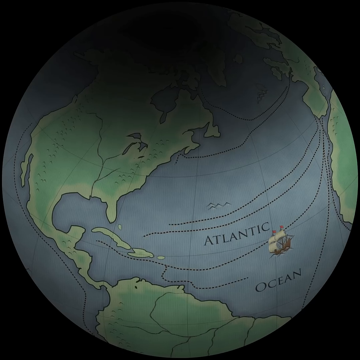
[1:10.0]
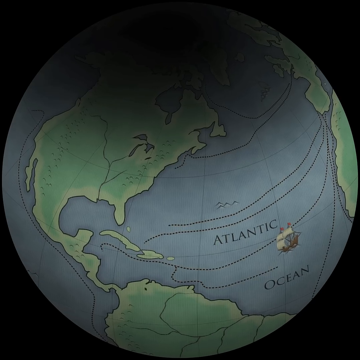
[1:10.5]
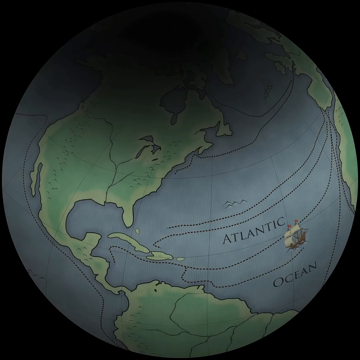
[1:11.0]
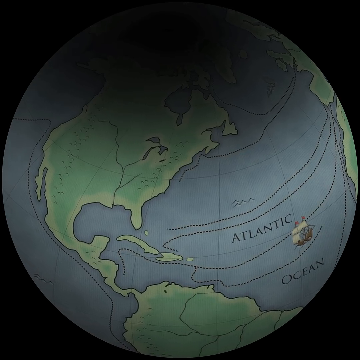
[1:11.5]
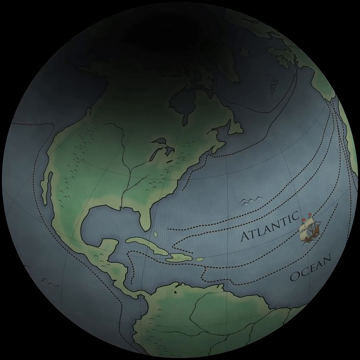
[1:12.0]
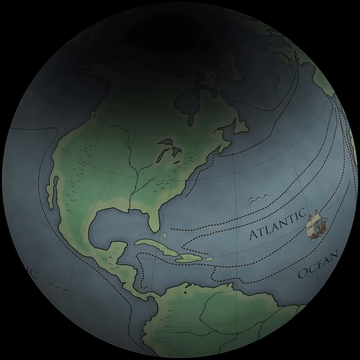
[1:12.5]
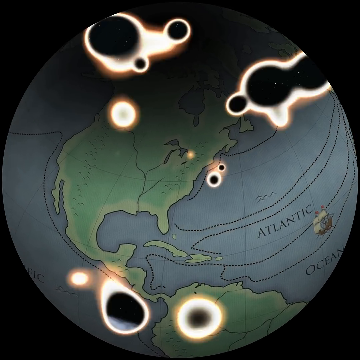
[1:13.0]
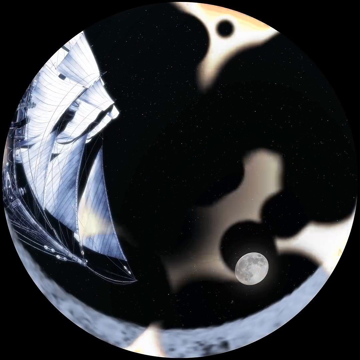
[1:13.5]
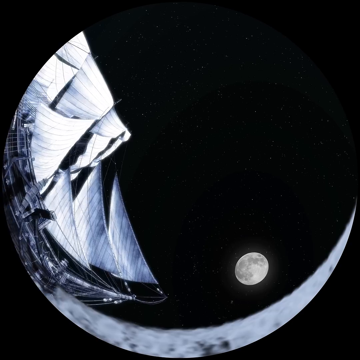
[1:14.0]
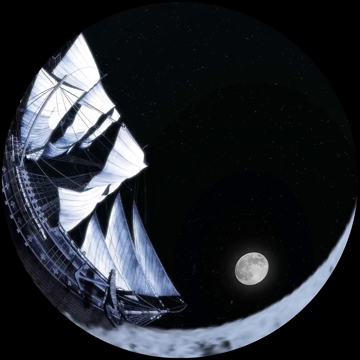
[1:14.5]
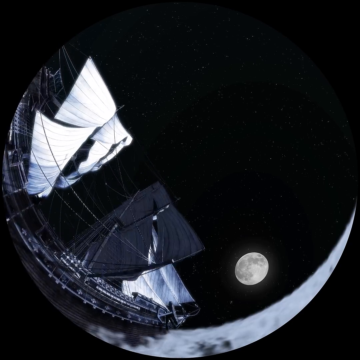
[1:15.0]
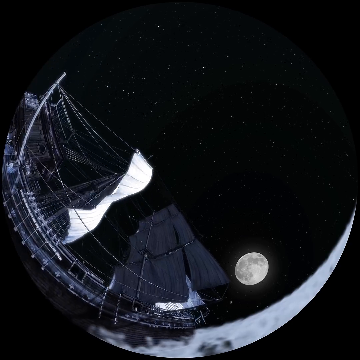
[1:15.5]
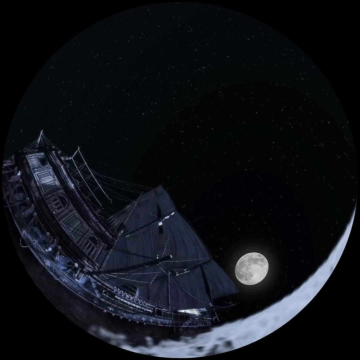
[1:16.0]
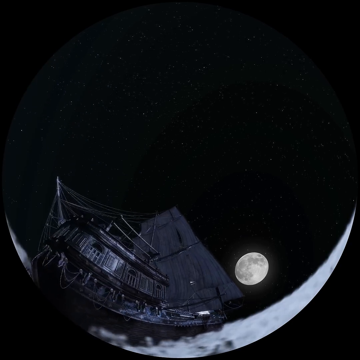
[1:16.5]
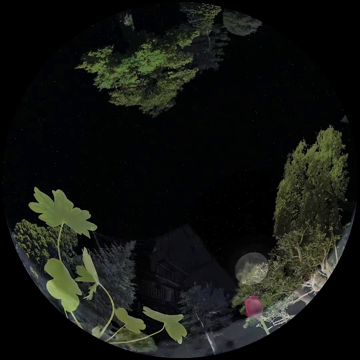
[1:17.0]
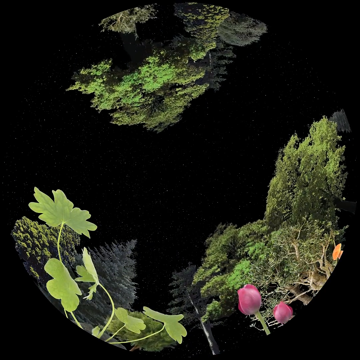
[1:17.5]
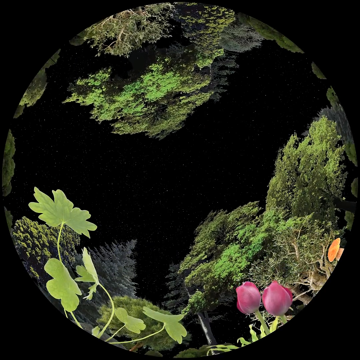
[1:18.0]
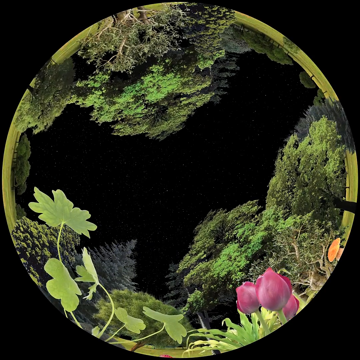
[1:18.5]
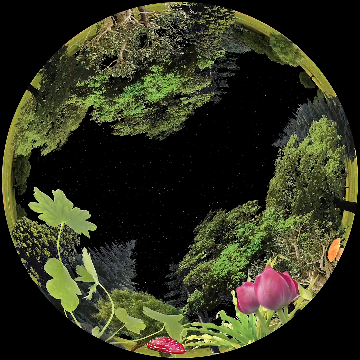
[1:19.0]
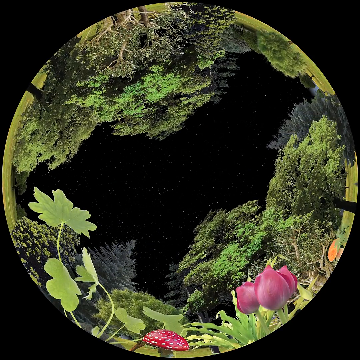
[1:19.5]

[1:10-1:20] A circular, stylized image of the world shows a small ship on the ocean, labeled Atlantic Ocean. The globe begins to turn, and a number of lines are drawn between continents and move around. The view changes to a pinwheel-style camera shot of a sailing ship, with the moon visible and quite bright in the back, and the ship moves past the camera. Keeping the circular pinwheel style, it then changes to a view of a number of plants and trees popping into every side of the frame.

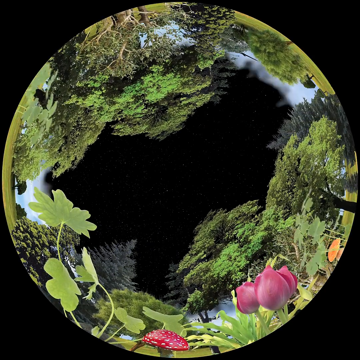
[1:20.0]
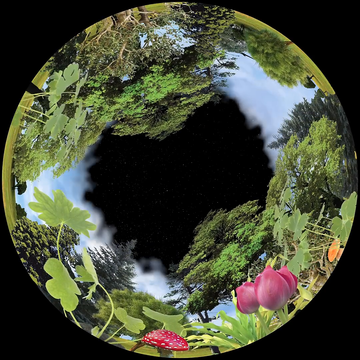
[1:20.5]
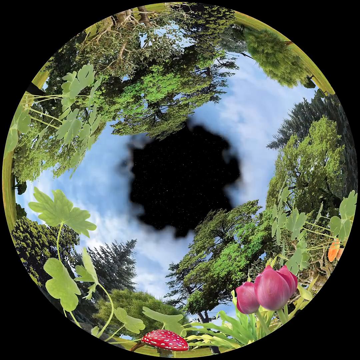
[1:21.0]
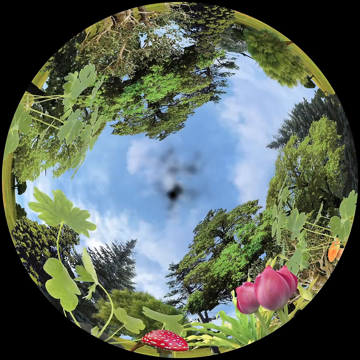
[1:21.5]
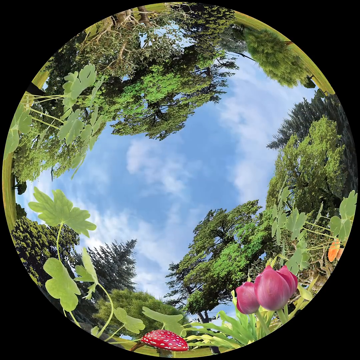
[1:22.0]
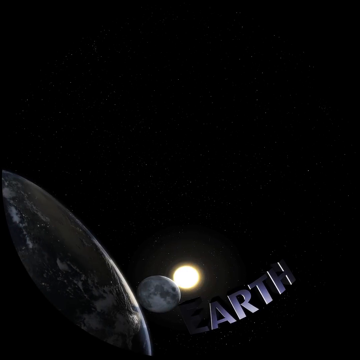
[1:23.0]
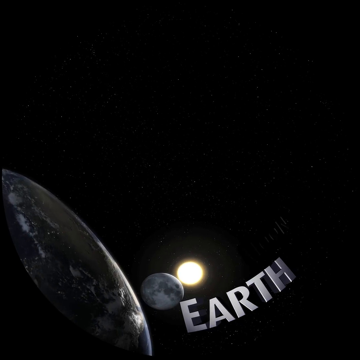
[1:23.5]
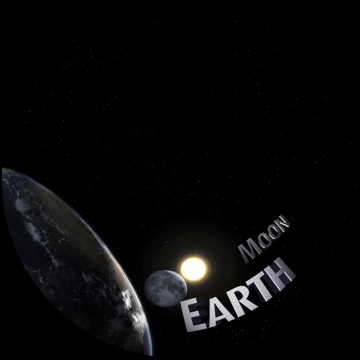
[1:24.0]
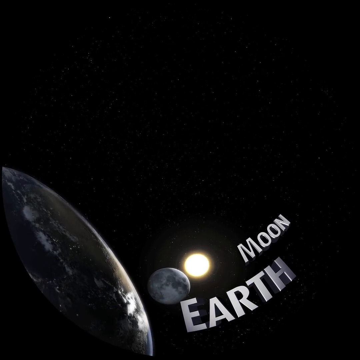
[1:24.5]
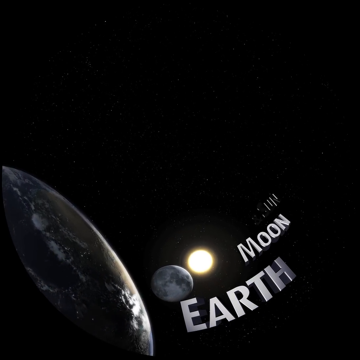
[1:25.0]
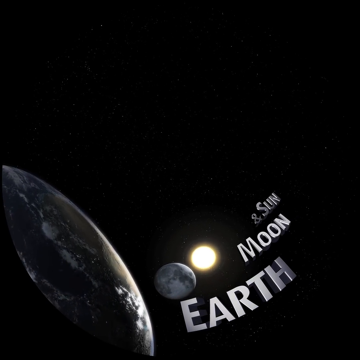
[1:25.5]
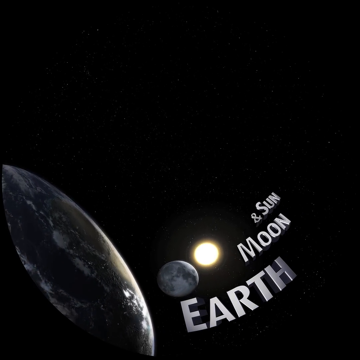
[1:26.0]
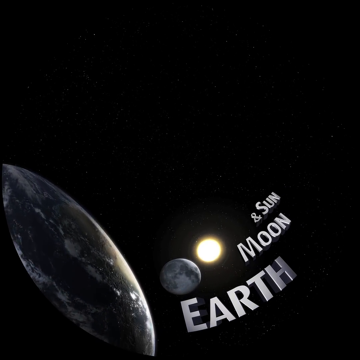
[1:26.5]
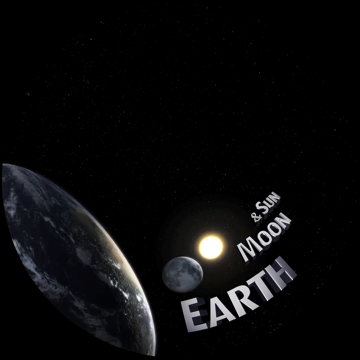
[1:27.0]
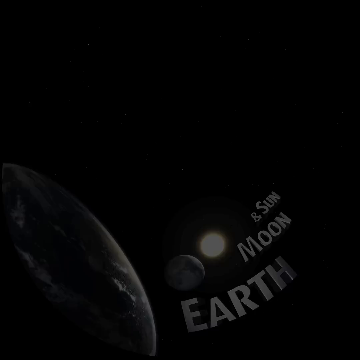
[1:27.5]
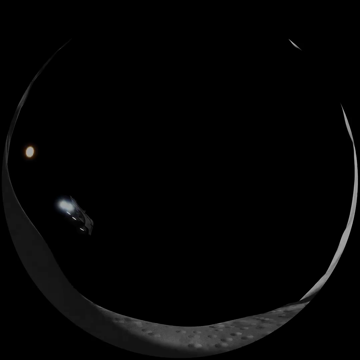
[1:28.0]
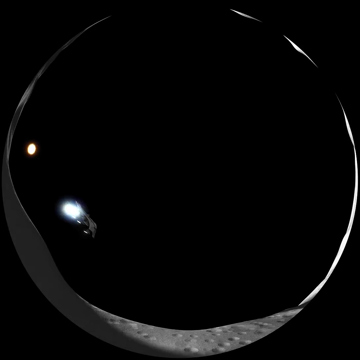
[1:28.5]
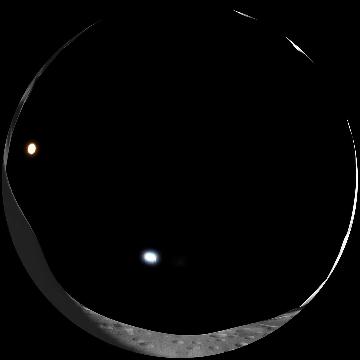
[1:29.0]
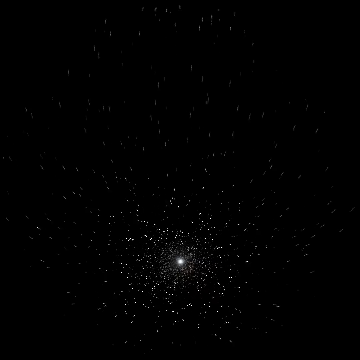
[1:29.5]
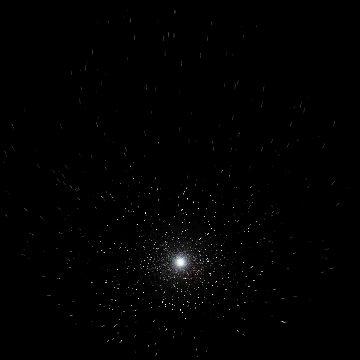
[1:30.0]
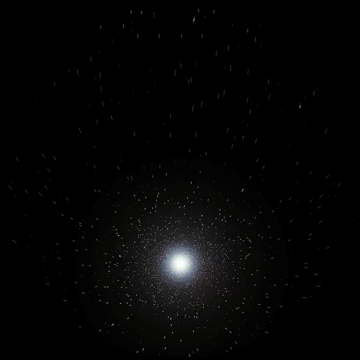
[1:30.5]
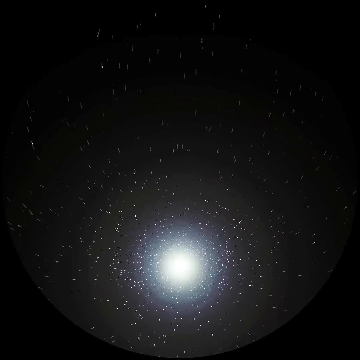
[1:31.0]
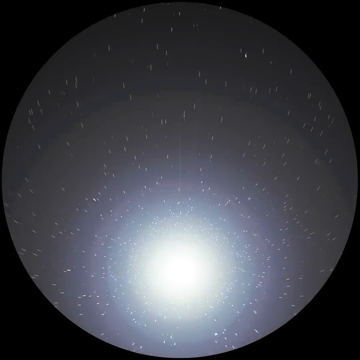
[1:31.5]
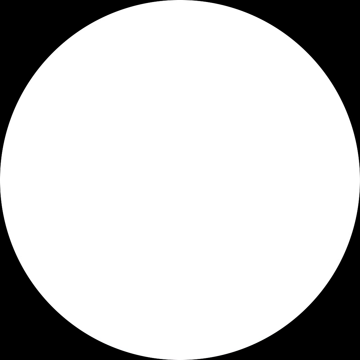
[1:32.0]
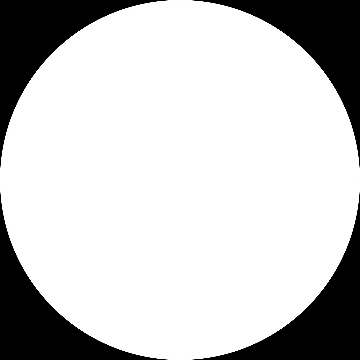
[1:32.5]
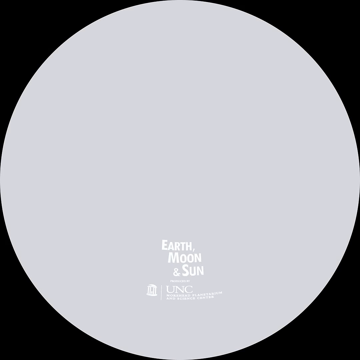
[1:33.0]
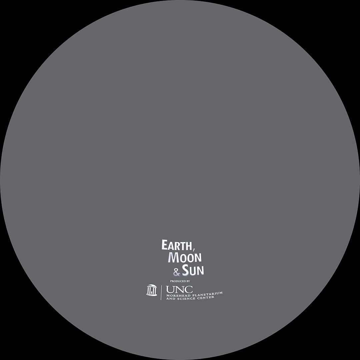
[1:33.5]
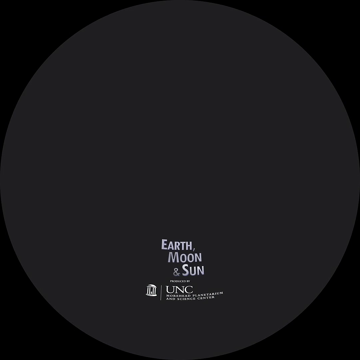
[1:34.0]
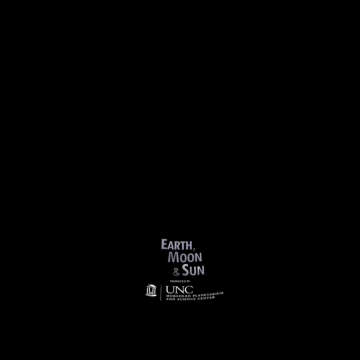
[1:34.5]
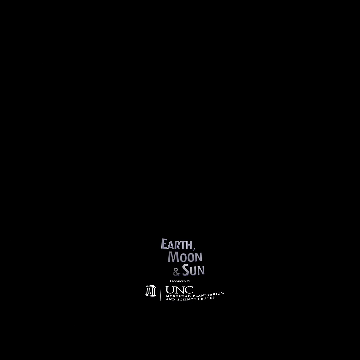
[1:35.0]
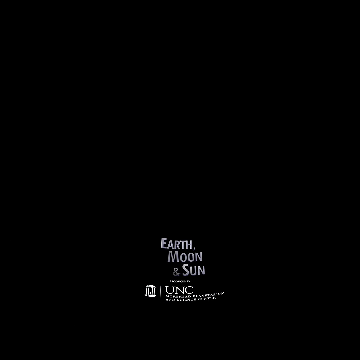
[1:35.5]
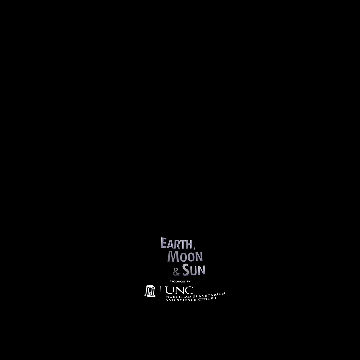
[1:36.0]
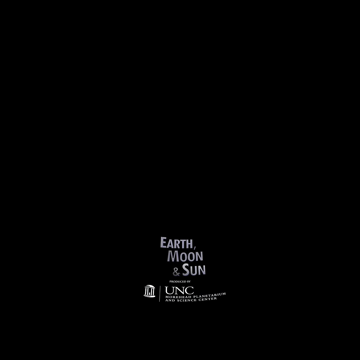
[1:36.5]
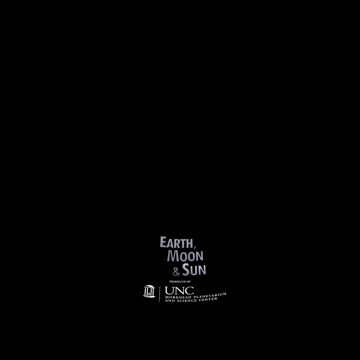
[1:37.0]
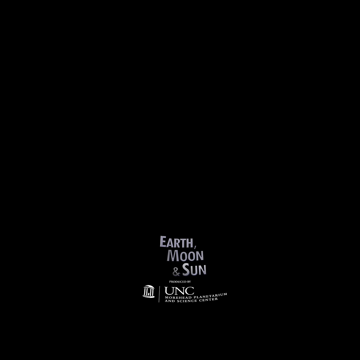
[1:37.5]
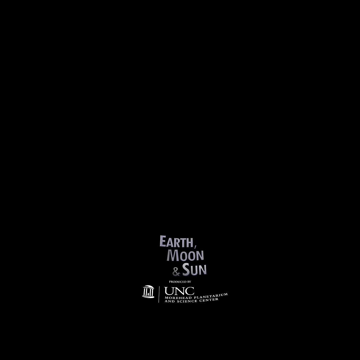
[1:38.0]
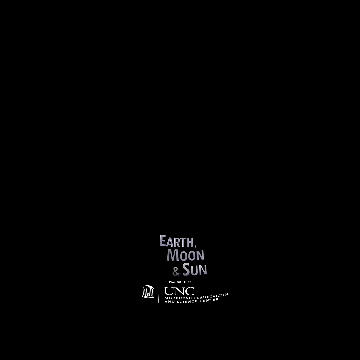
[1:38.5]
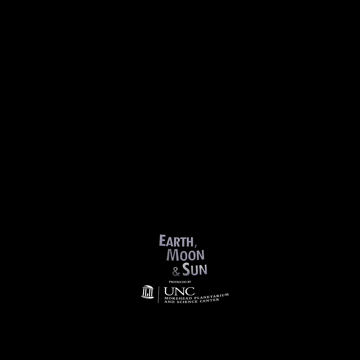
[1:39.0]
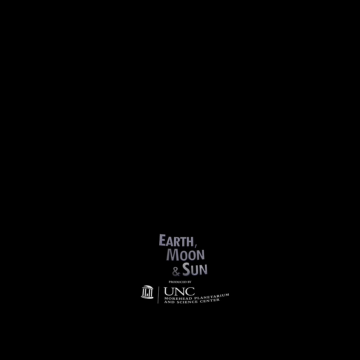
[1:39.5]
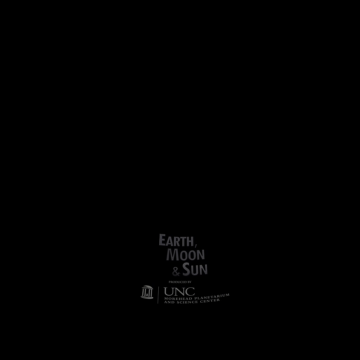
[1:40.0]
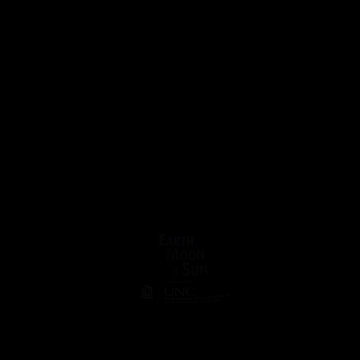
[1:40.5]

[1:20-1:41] A pinwheel-style view shows trees and flowers so that every side of the circle has plants in it, while the center of the circle holds a blue sky with a few clouds. The plants include what appear to be clover, trees, and red and orange flowers. It changes to a graphic of Earth, the Moon and the Sun, with Earth and Moon labeled in large grey text before "& Sun" pops up, showing all three in space with their labels beside them and a large amount of black, empty space behind them. A circular pinwheel-style view then shows a launch into space, passing a number of what appear to be stars, before reaching a white screen that transitions to a solid black screen. At the bottom of the pinwheel is text reading "Earth, Moon, & Sun", with a logo for UNC.